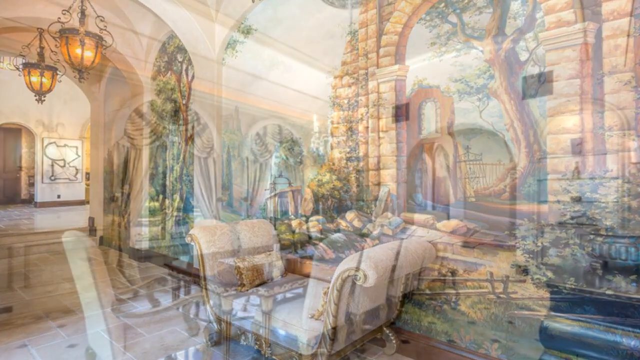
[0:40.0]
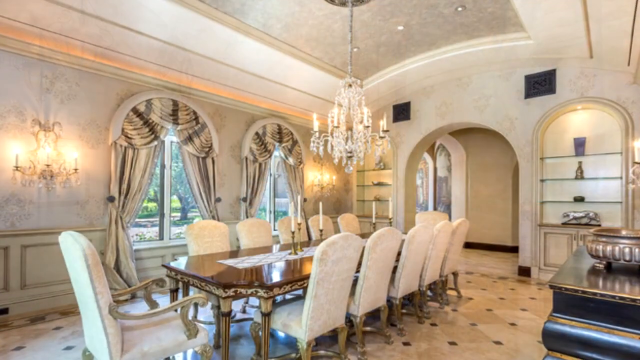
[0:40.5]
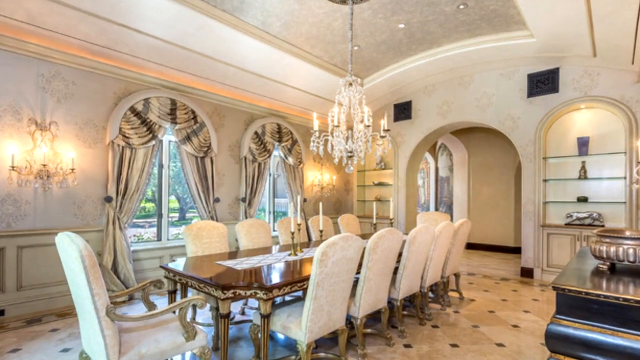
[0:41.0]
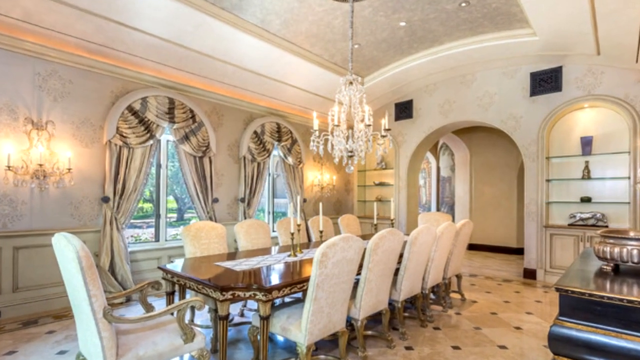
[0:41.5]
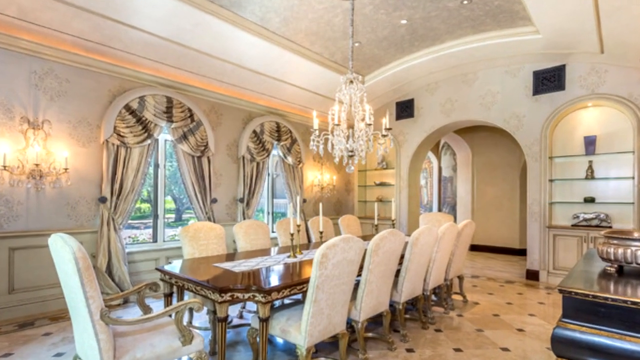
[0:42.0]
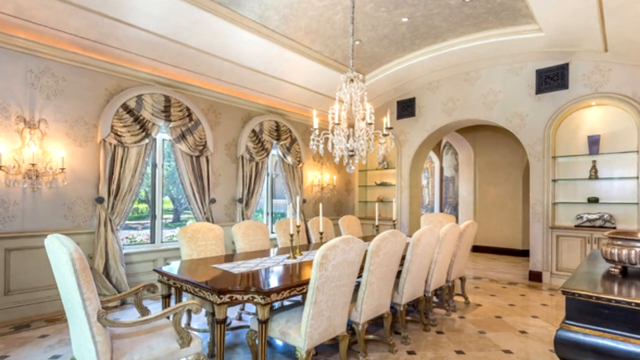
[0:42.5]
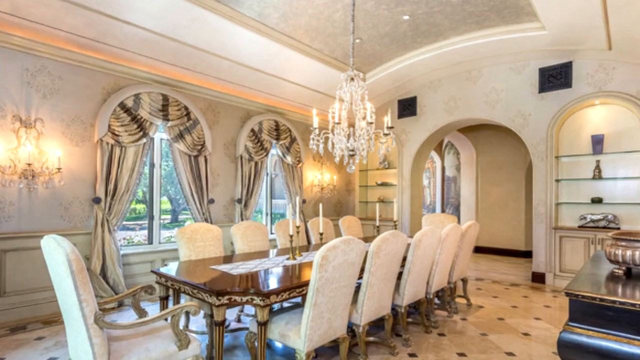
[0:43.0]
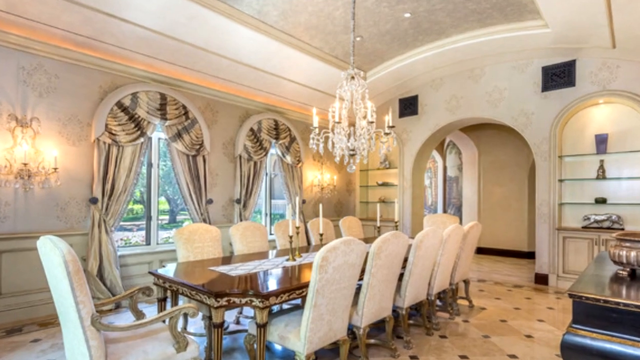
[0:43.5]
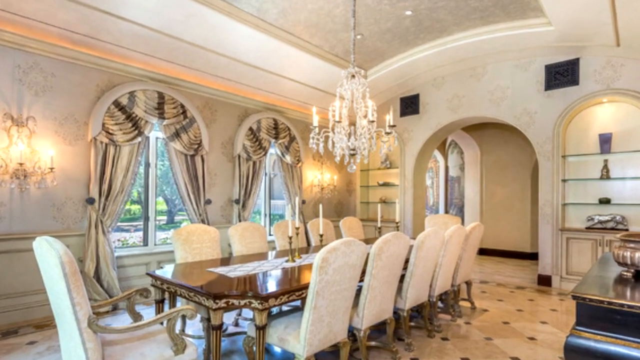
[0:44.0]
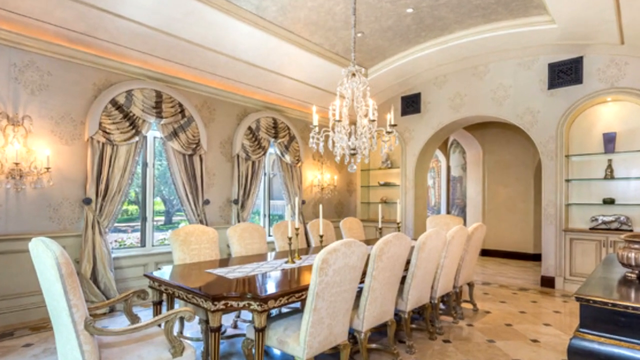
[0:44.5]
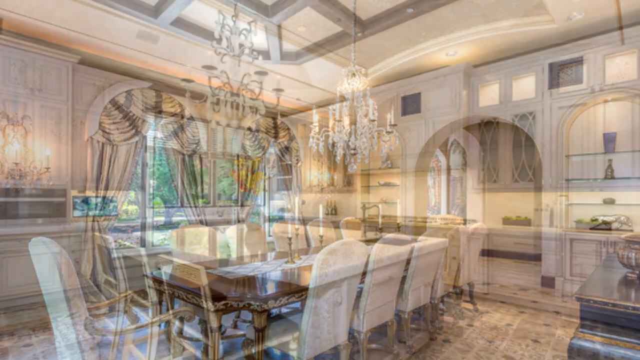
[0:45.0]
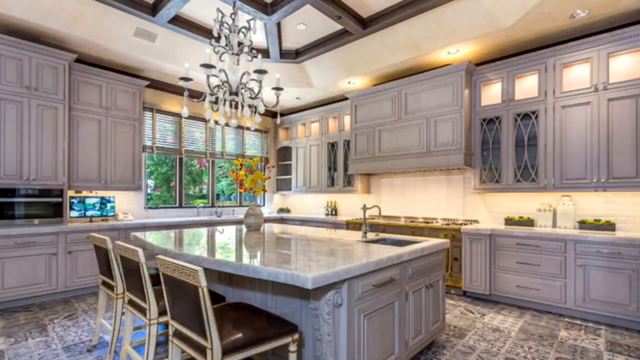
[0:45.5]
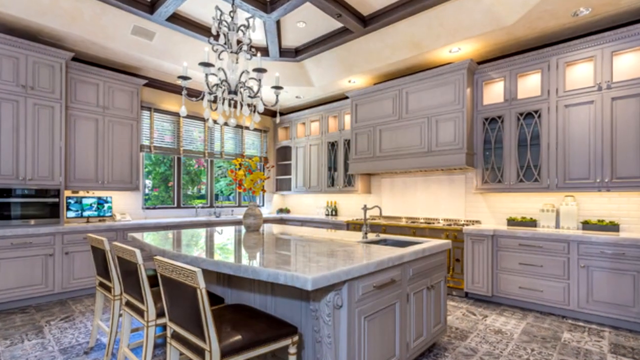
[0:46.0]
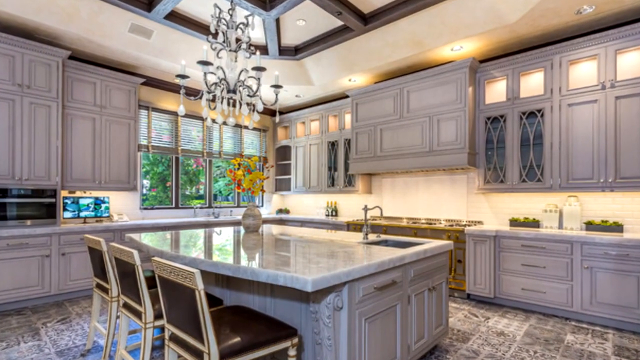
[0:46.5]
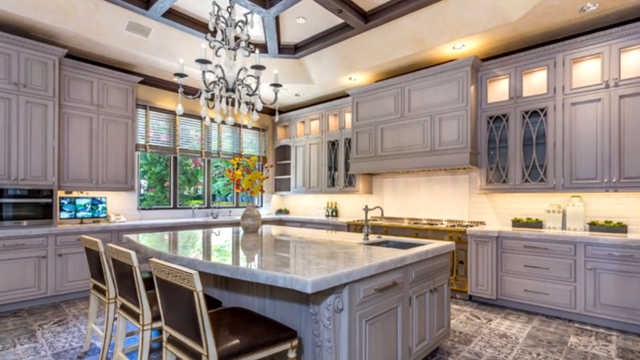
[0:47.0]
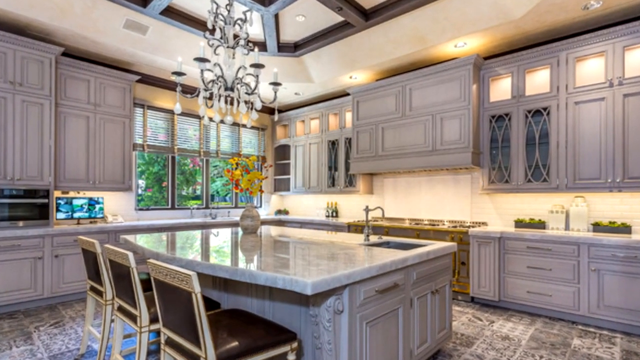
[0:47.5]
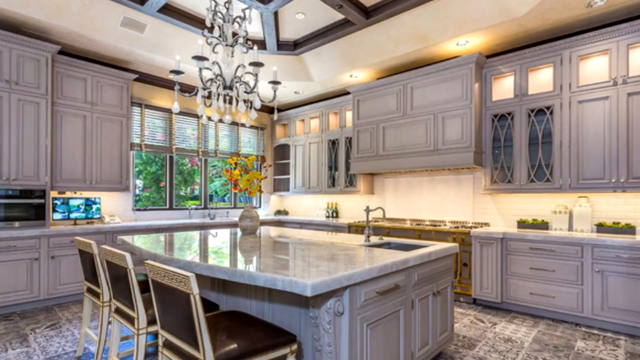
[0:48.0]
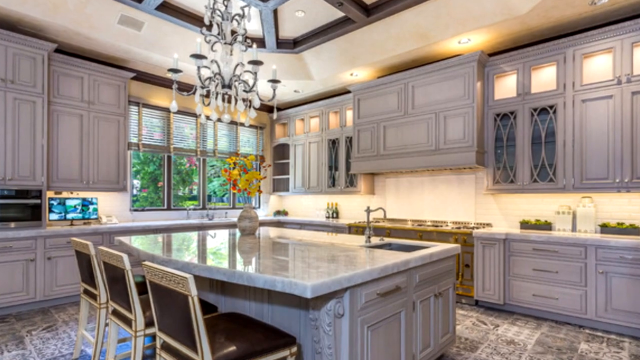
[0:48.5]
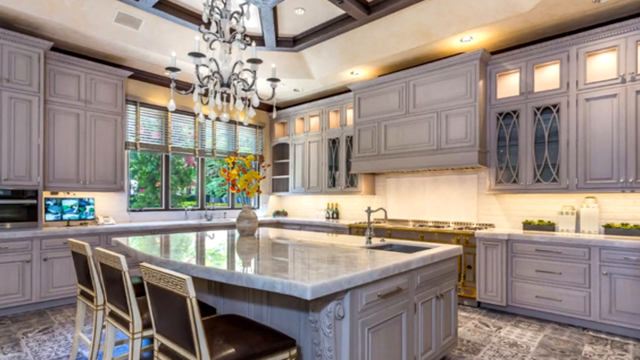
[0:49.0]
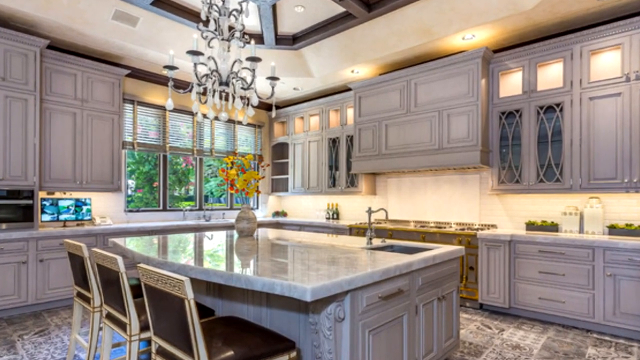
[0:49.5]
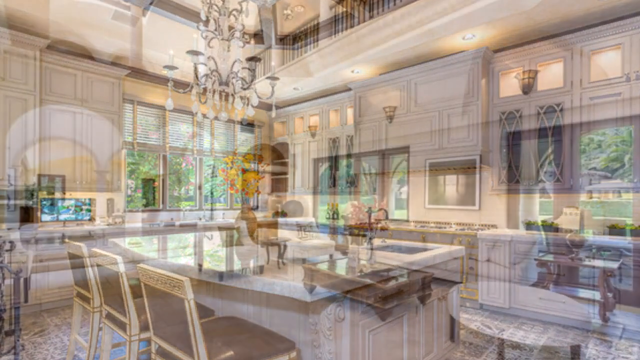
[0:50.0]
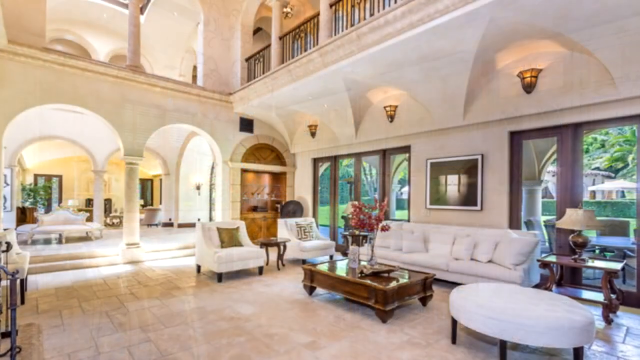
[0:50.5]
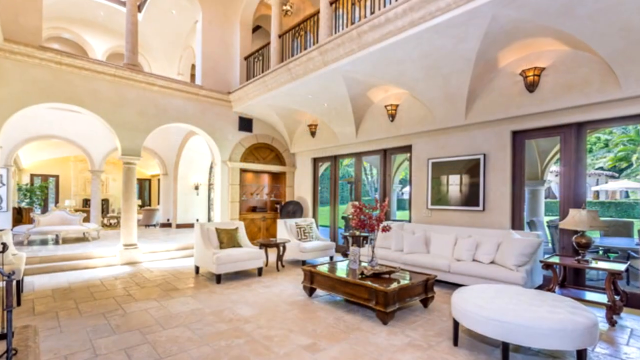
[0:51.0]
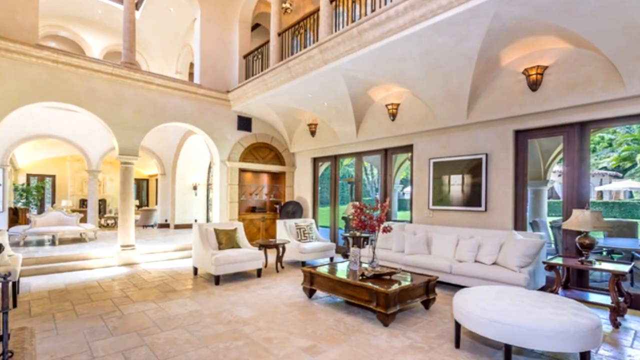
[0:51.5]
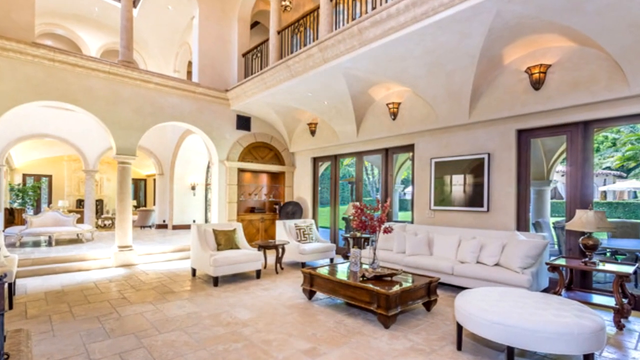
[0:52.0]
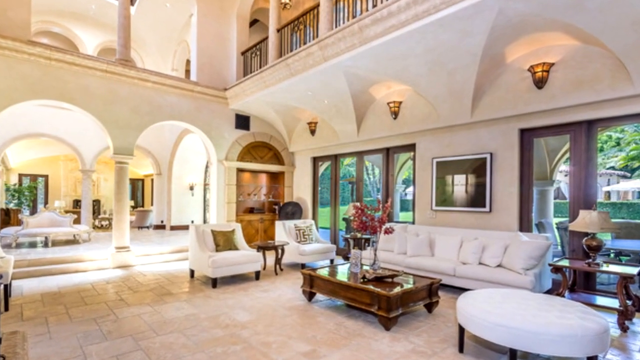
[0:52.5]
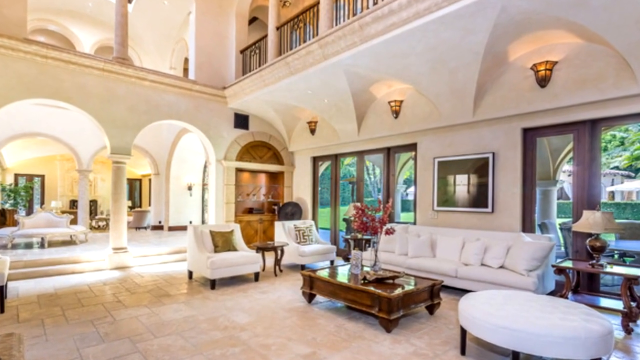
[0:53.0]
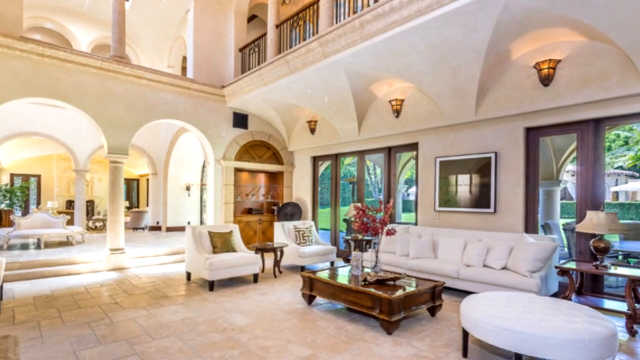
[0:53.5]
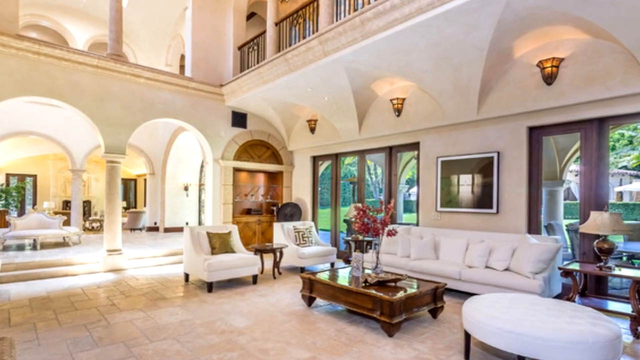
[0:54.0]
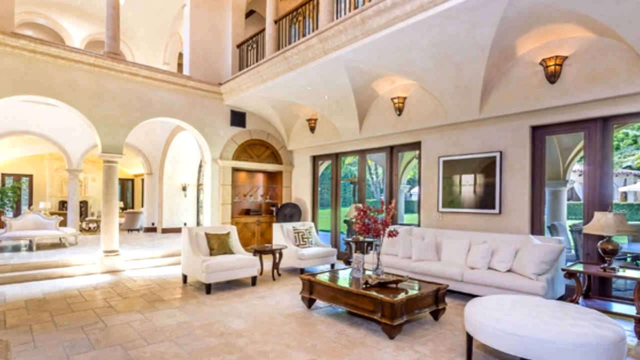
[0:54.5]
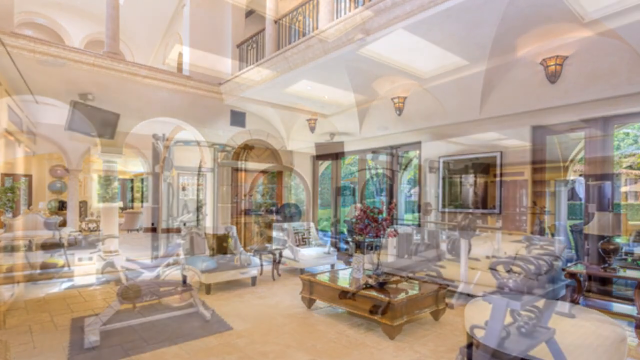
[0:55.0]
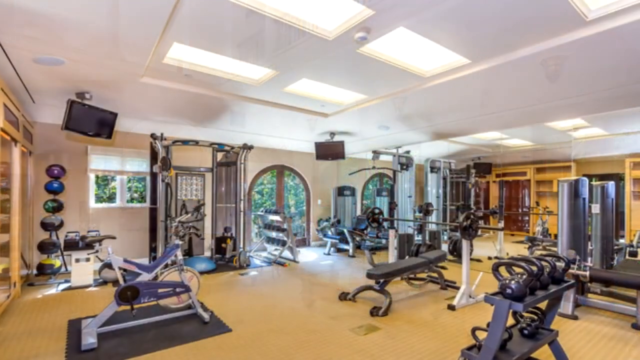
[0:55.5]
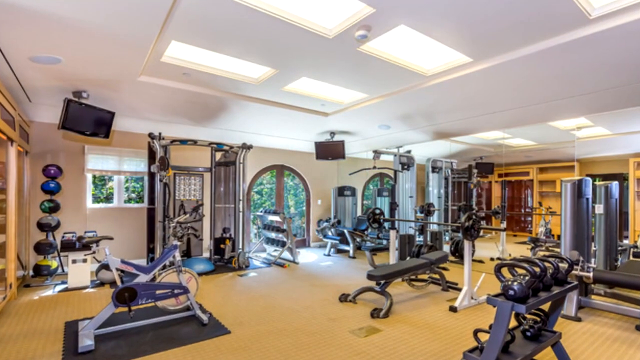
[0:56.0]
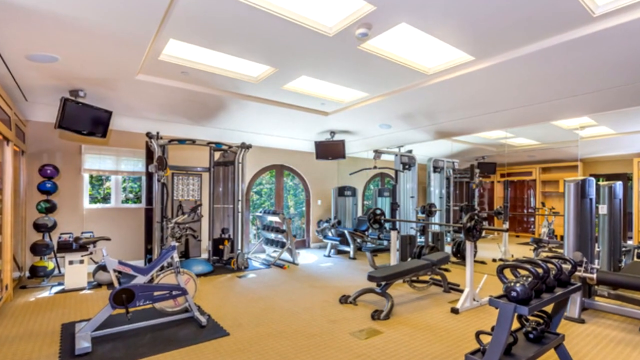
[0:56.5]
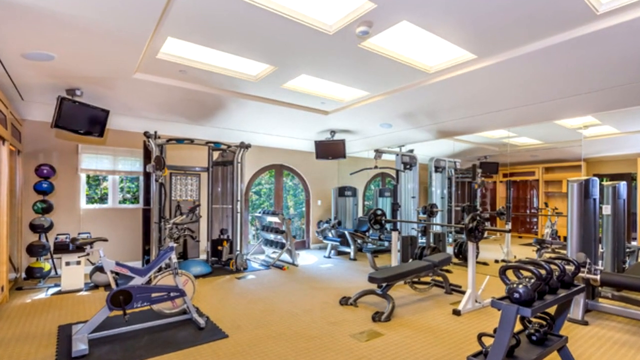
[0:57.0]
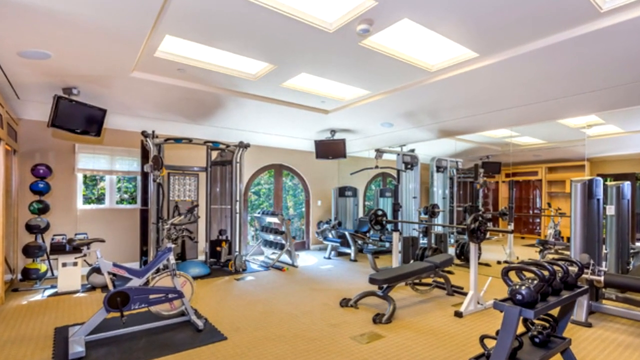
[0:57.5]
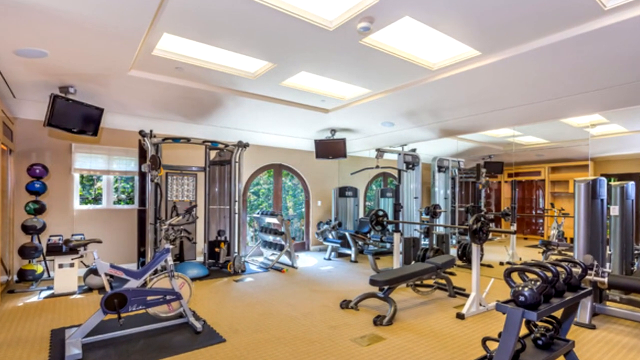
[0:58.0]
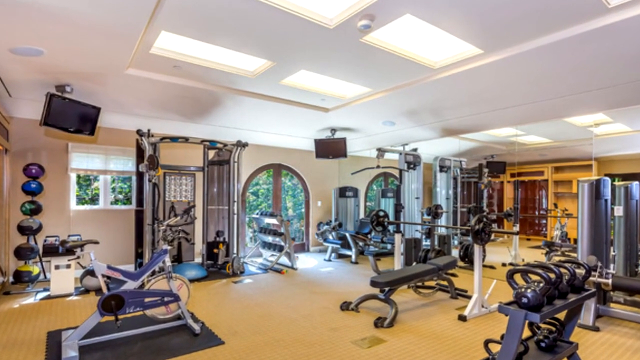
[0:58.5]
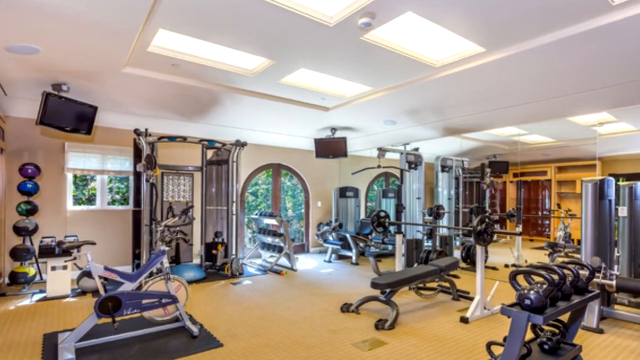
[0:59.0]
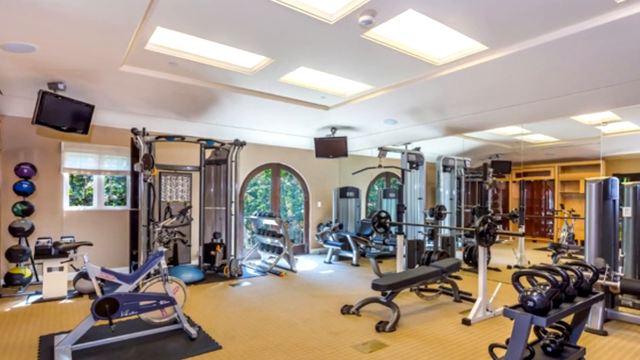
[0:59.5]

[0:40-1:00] A picture shows a dining room area with multiple windows and white and gray drapes that are tied back. A long black table is surrounded by white velvet chairs, and a crystal chandelier with multiple candles in it hangs over the table. The room is mostly tan, with symbols that look similar to a star in the tan areas of the walls. The next picture shows the kitchen area. In the center is a large individual island with a tan marble top, three chairs pulled up to it, and brown cabinets surrounding it. A crystal chandelier hangs over the island, and the kitchen also has a window. Then comes what appears to be a spacious living room area, overlooked by a second floor. A couch and two chairs surround a brown table, and doors behind the couches seem to look out to the backyard of the house. Finally, an exercise room in the house contains multiple weight benches, multiple exercise machines and weights.